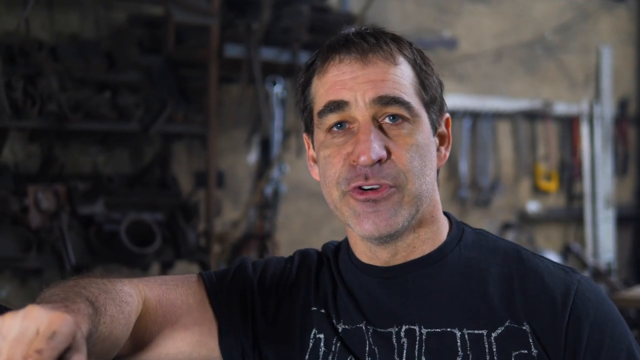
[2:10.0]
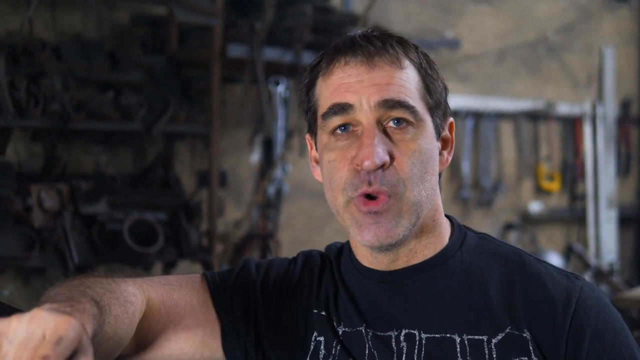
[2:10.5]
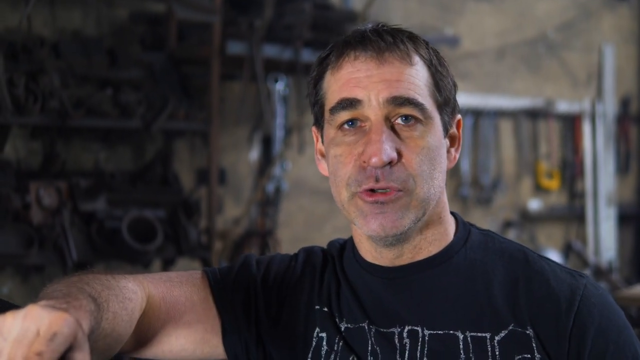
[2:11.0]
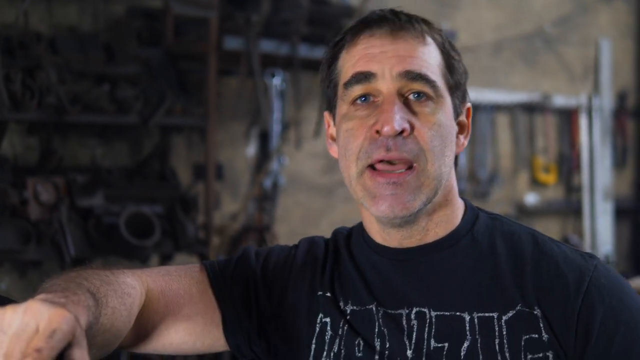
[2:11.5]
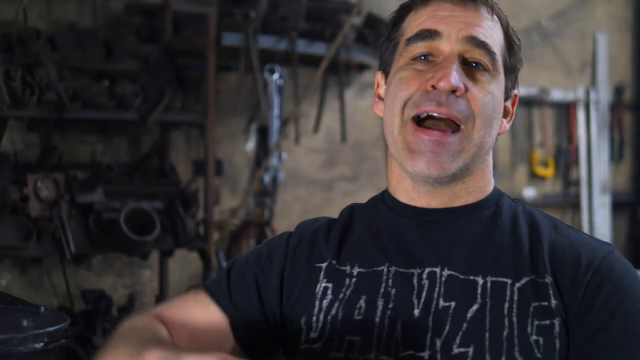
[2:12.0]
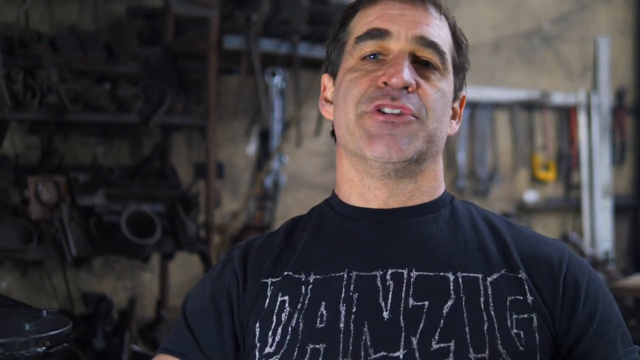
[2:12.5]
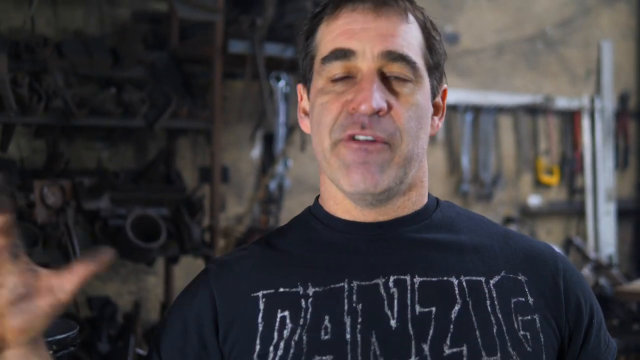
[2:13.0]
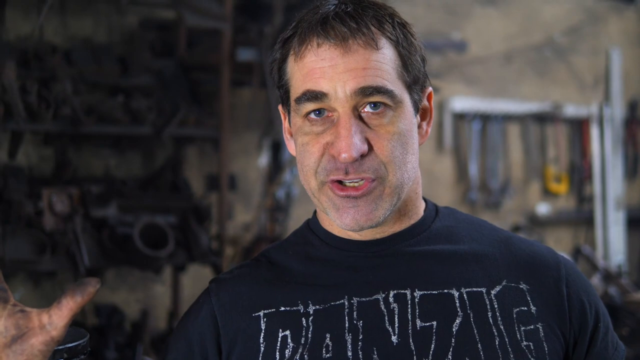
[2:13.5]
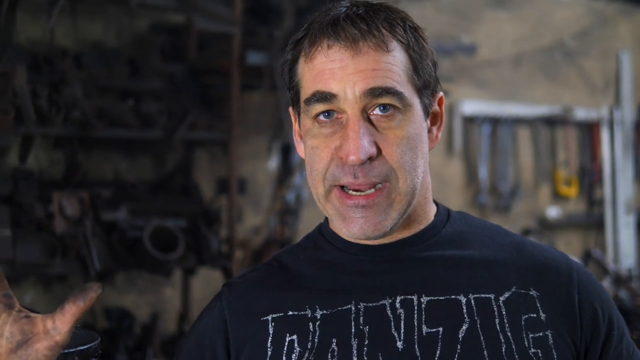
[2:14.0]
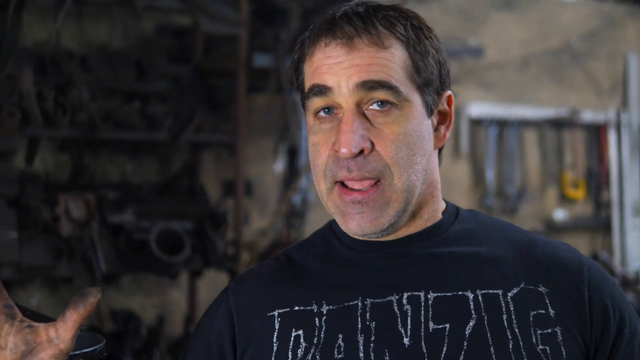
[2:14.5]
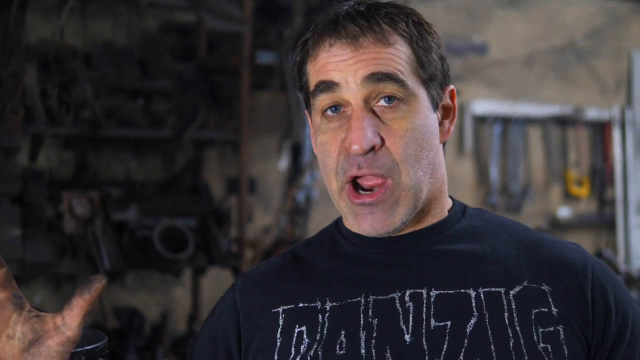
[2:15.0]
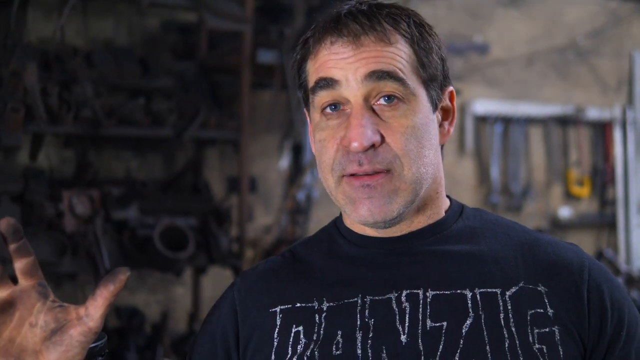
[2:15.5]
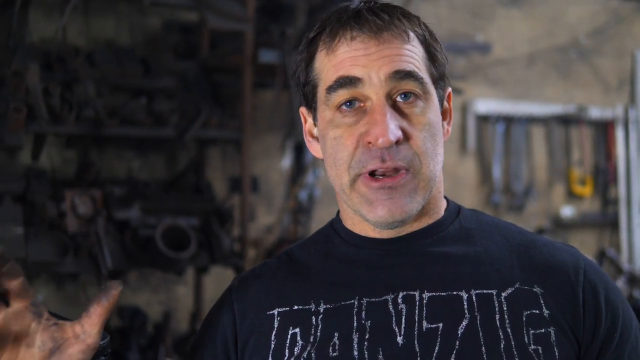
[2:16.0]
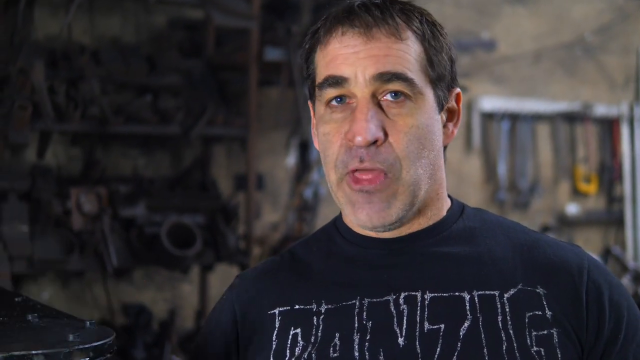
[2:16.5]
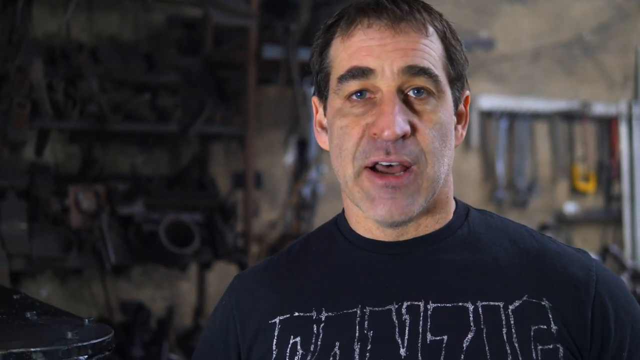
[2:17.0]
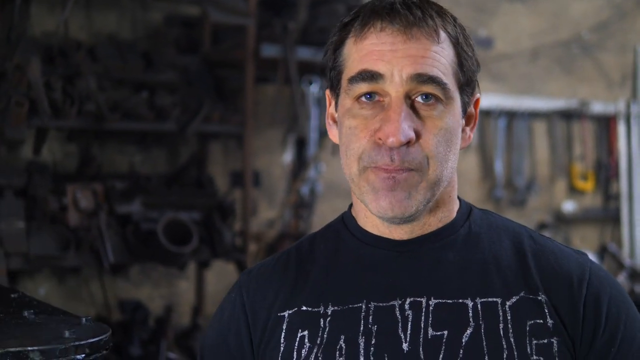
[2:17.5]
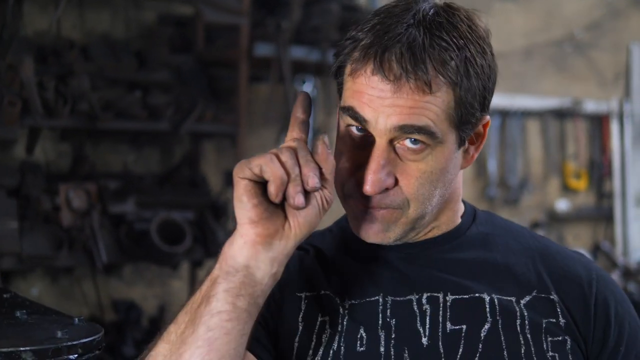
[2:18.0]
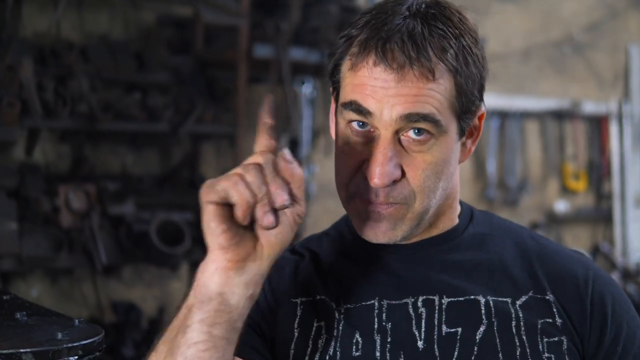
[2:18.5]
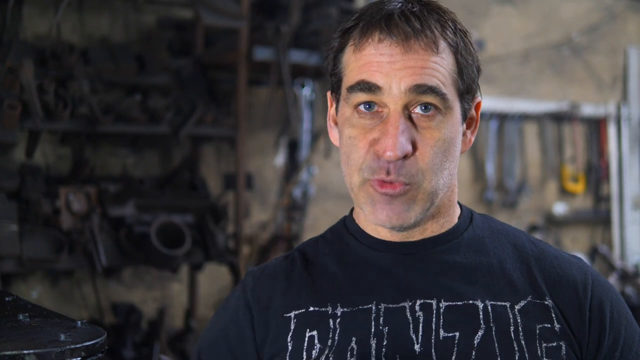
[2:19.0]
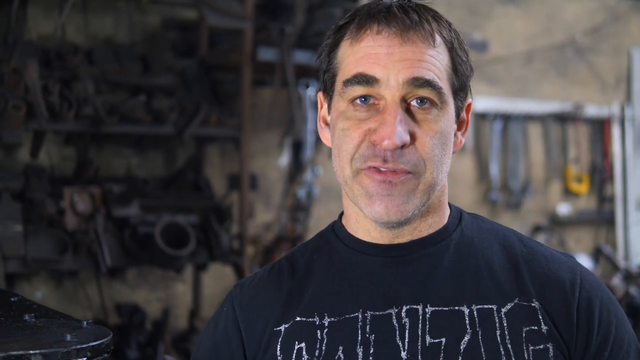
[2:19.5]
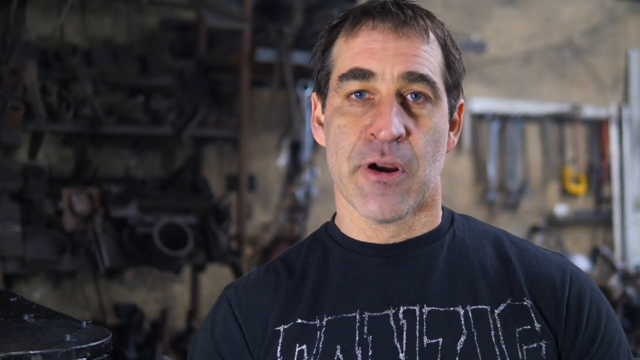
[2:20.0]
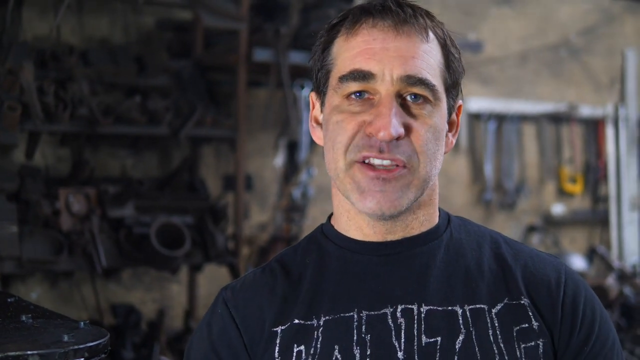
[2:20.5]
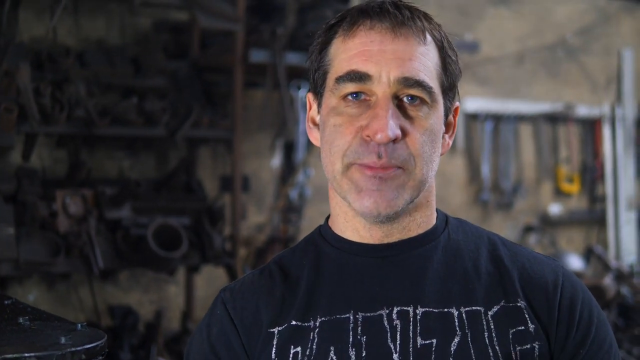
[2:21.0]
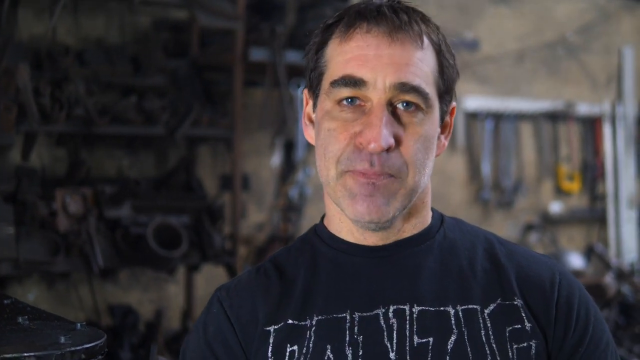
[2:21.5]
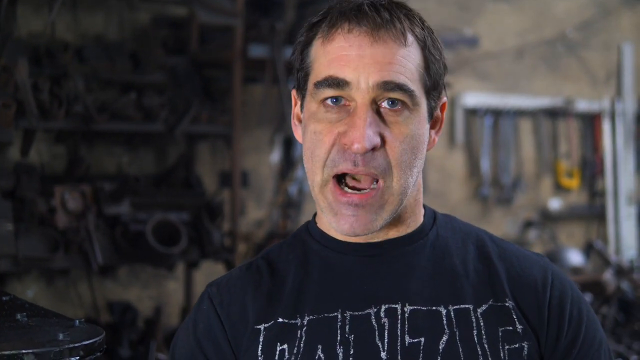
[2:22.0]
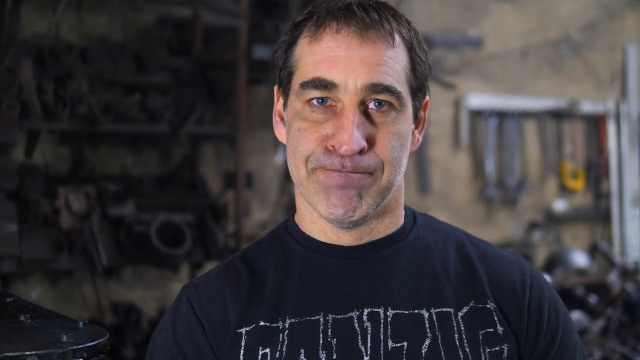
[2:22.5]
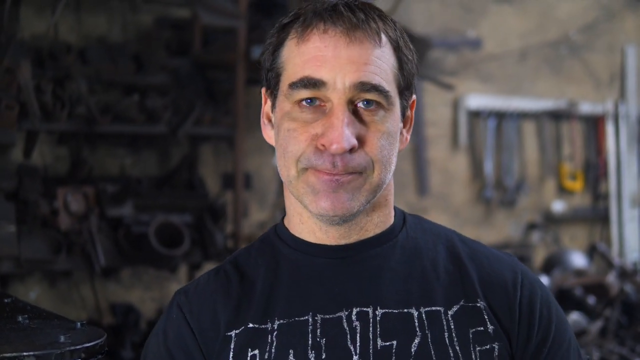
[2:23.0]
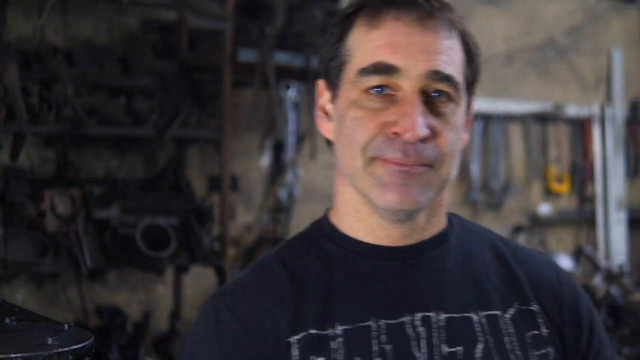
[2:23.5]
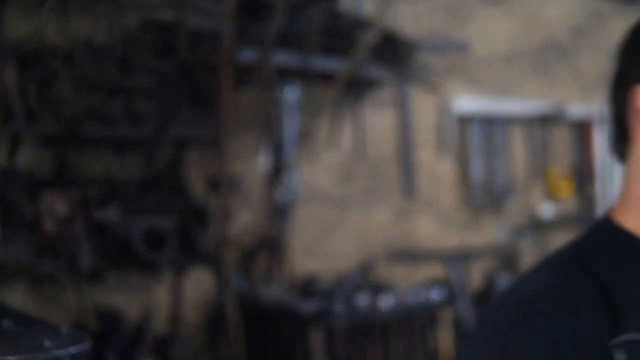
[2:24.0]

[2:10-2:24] The man appears to be finishing up. With one hand up and a serious look, he gives a nod to sign off. His hands are dirty, and he wears the same shirt.